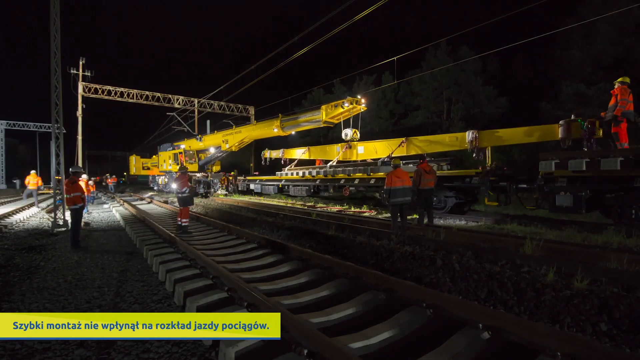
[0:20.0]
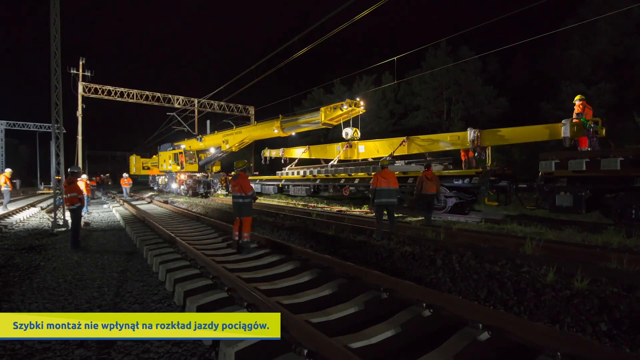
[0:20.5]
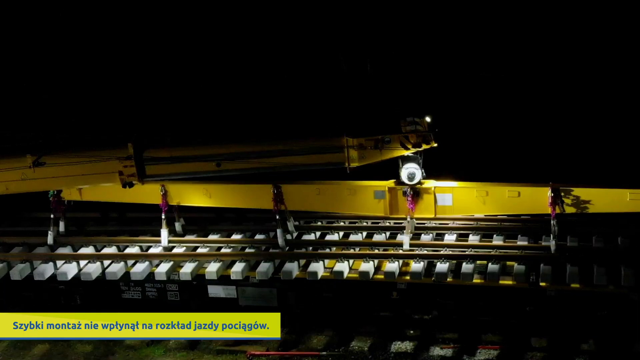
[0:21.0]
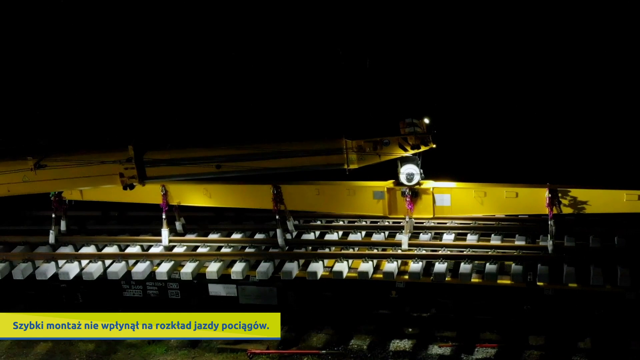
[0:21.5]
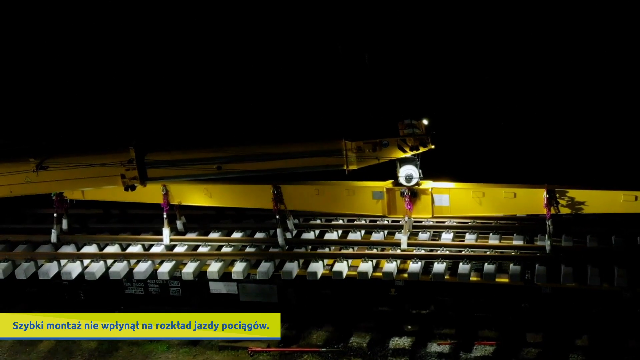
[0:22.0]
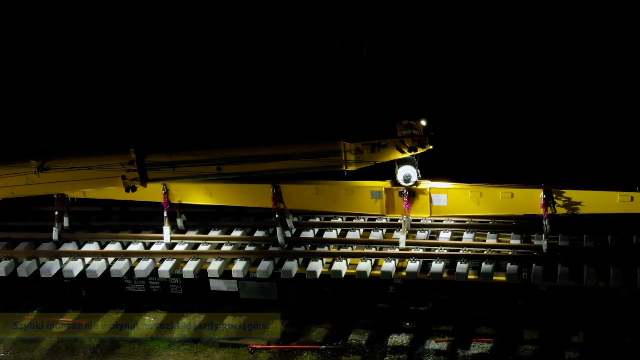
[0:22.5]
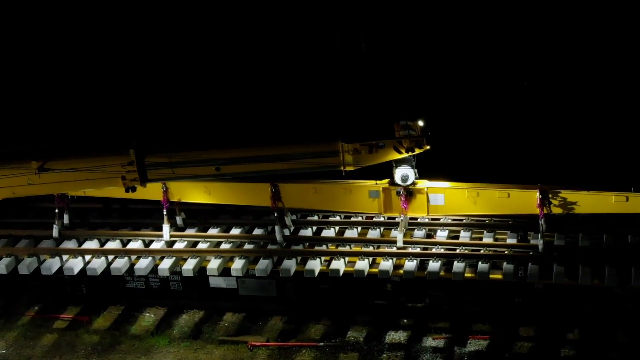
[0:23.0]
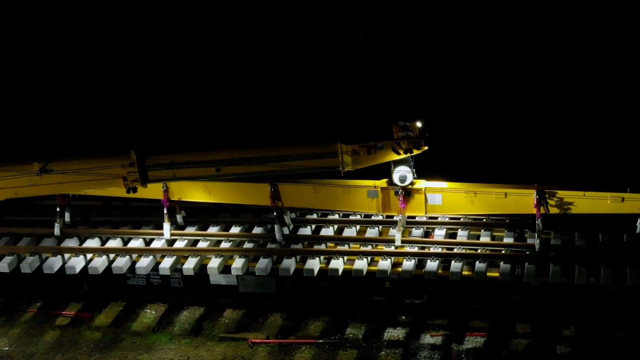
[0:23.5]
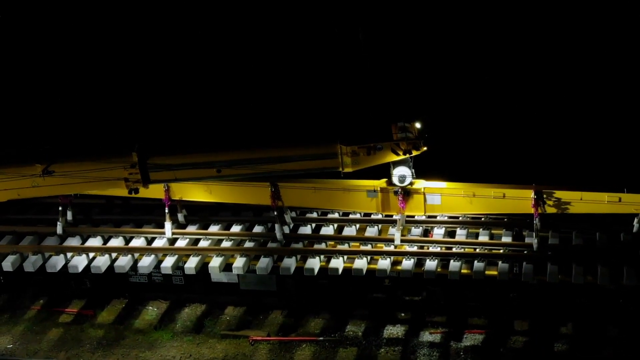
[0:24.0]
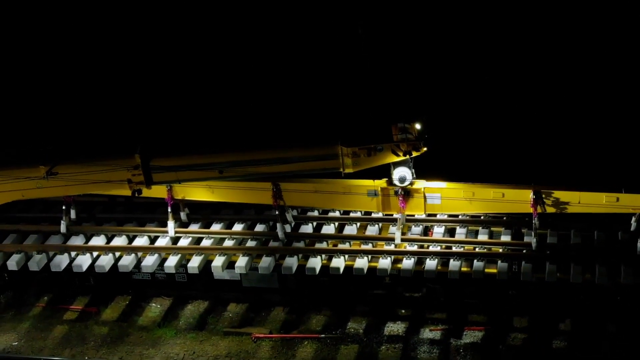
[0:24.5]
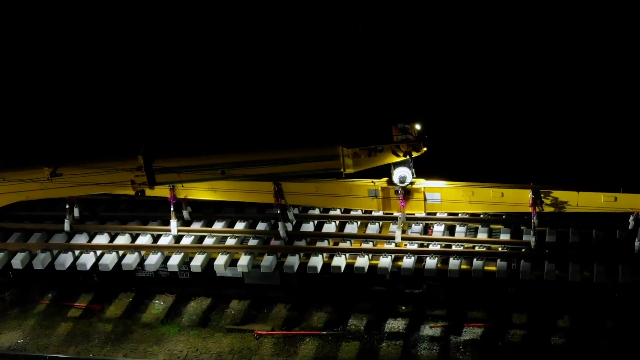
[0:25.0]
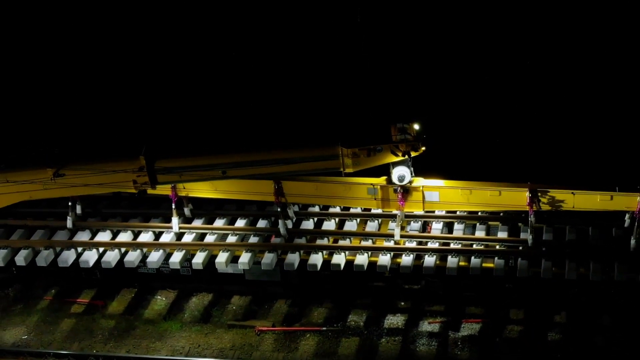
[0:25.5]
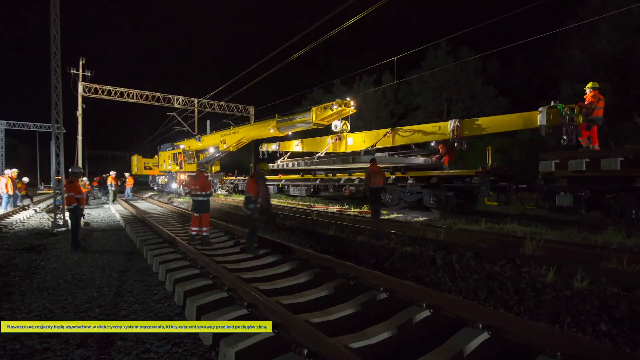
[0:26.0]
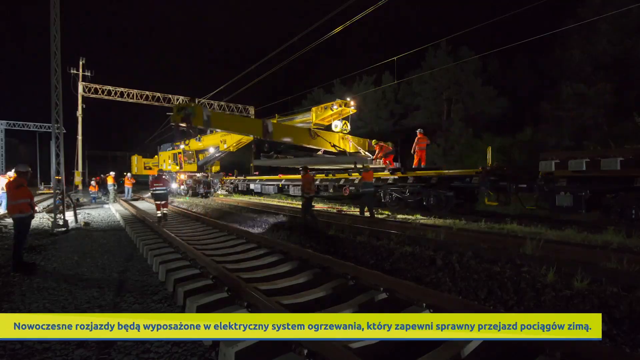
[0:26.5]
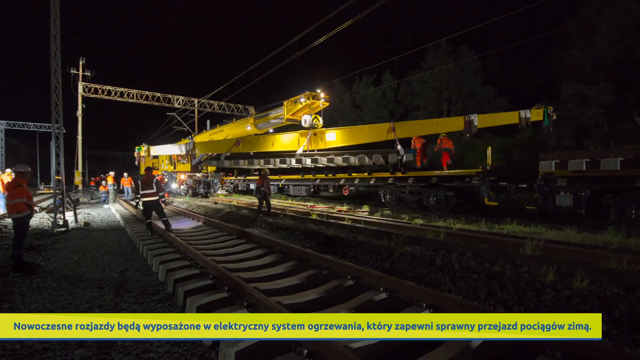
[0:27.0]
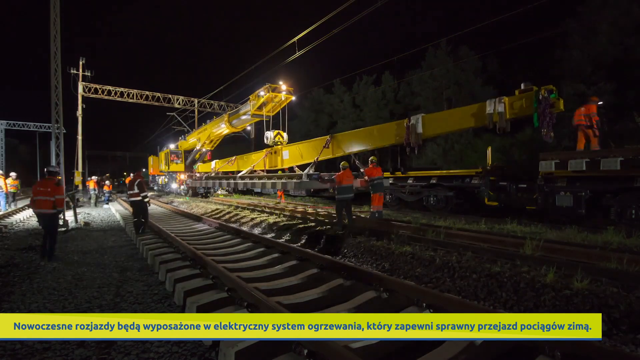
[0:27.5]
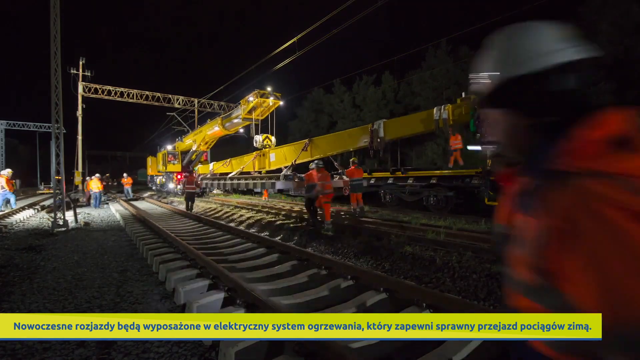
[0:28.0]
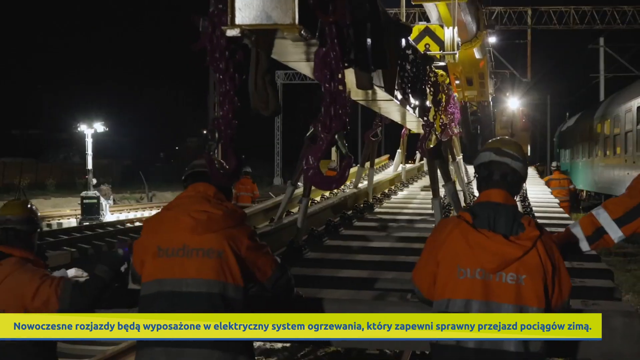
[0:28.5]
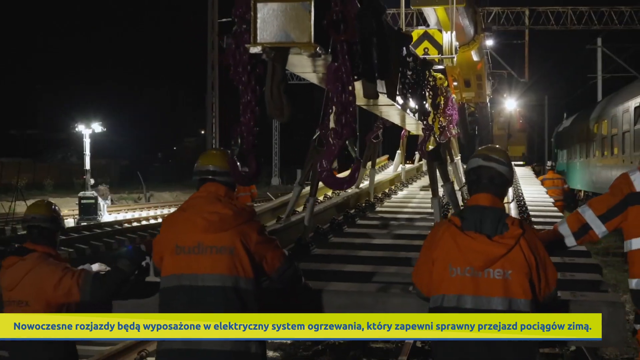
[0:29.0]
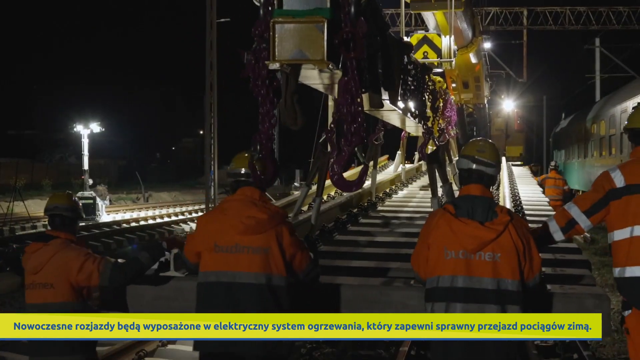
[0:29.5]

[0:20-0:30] The same metal crane lowers the long yellow piece of metal. About six workers in yellow jumpsuits and hard hats are on the left side, while two or three workers on the right side work on putting the crane down. In the bottom left there is a yellow text box with blue words in it. The video cuts to an aerial view of the crane and the long piece of metal being placed down on train tracks. Another time lapse shows the yellow piece of metal being spun around counterclockwise while the crane moves to the right and lowers the piece of metal and the train tracks hanging from it. Then four workers in the front carry the train track and move it down the line, while about one or two men on the far right and two men on the left side hold the piece of metal.